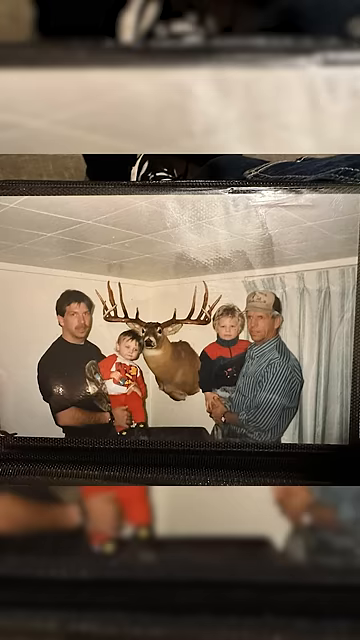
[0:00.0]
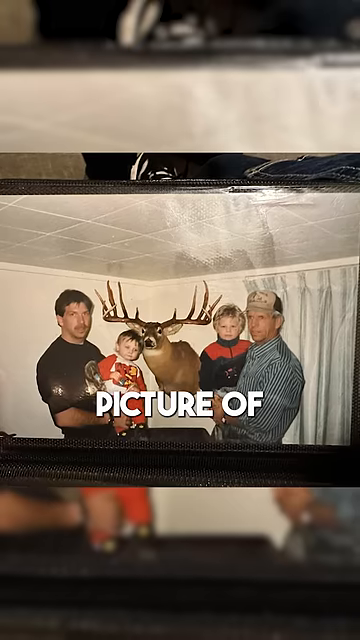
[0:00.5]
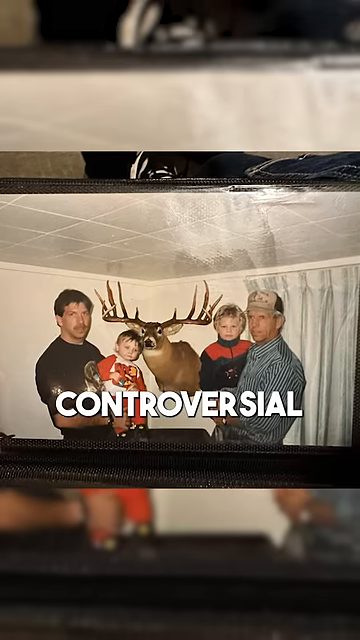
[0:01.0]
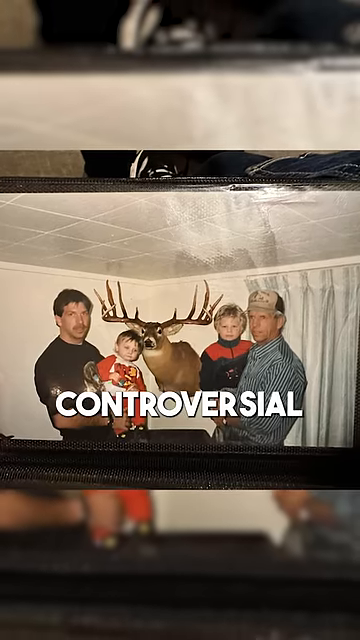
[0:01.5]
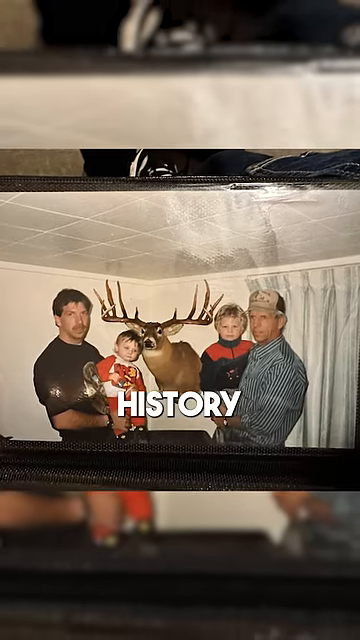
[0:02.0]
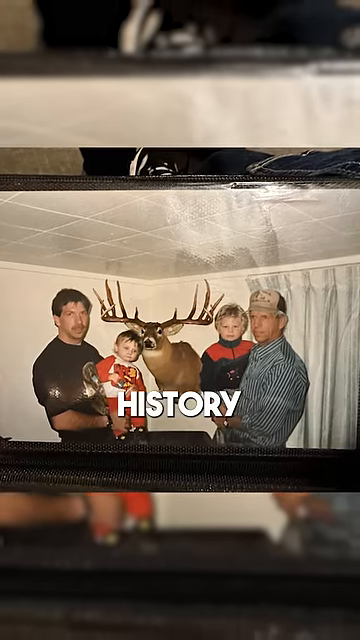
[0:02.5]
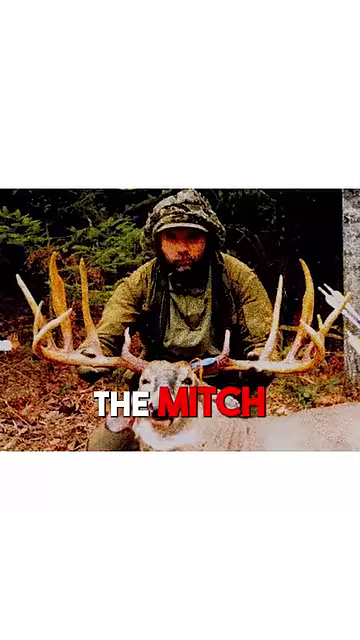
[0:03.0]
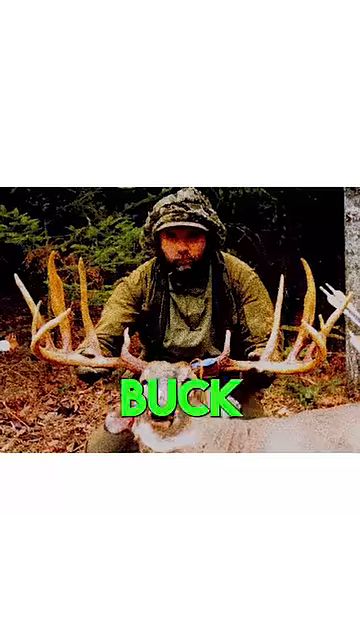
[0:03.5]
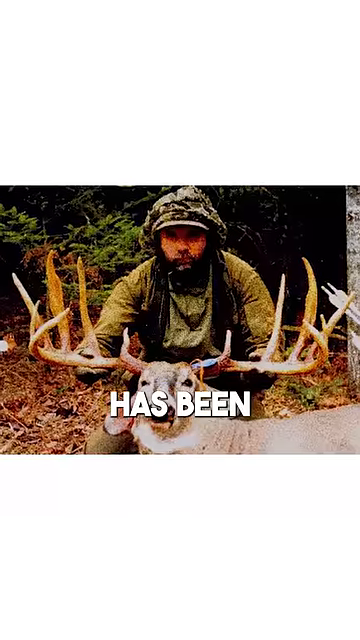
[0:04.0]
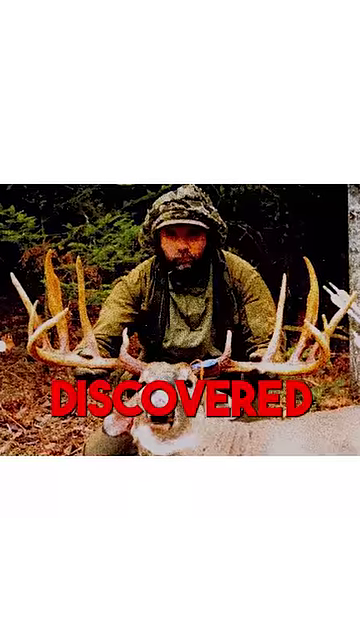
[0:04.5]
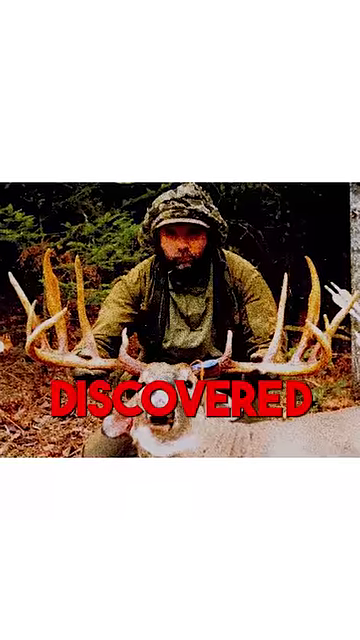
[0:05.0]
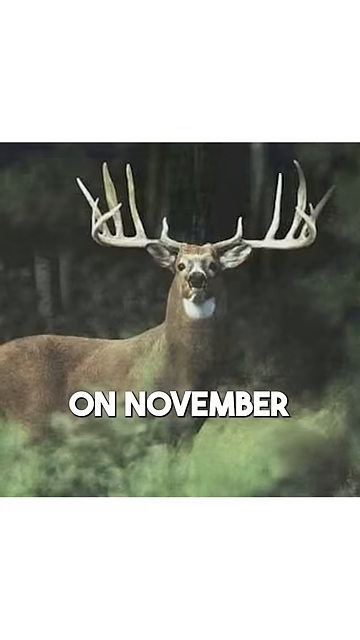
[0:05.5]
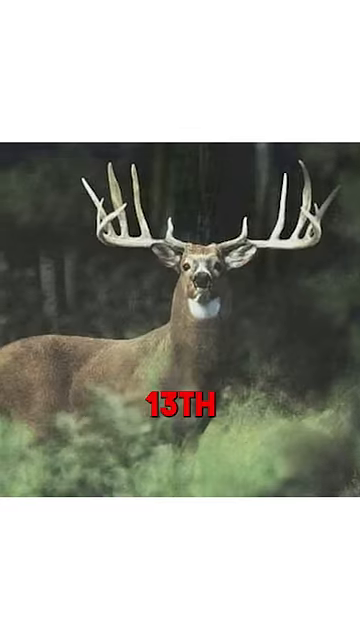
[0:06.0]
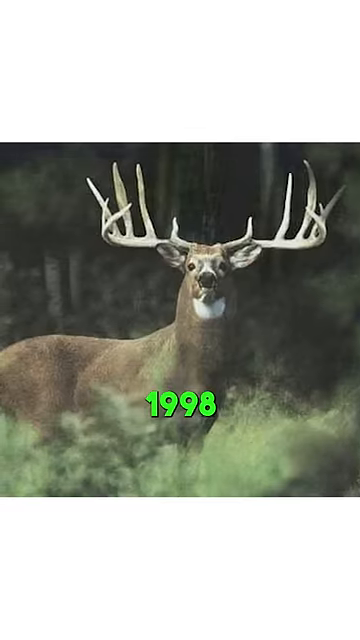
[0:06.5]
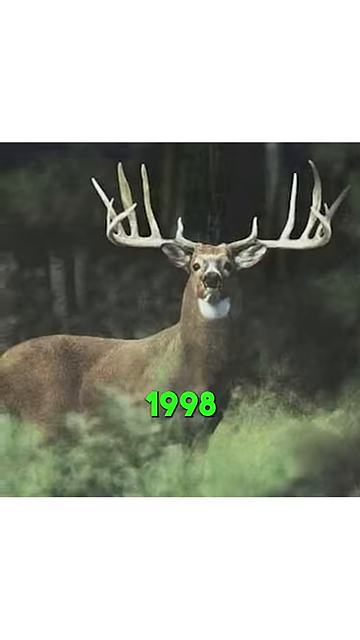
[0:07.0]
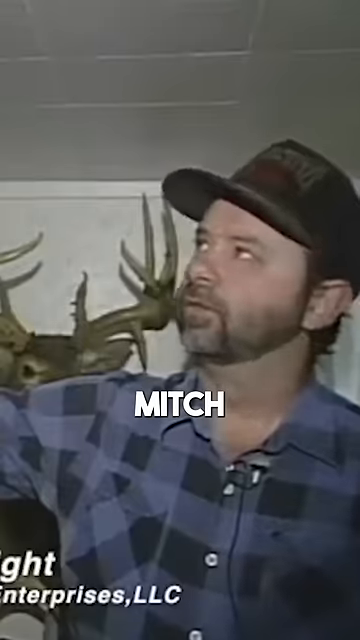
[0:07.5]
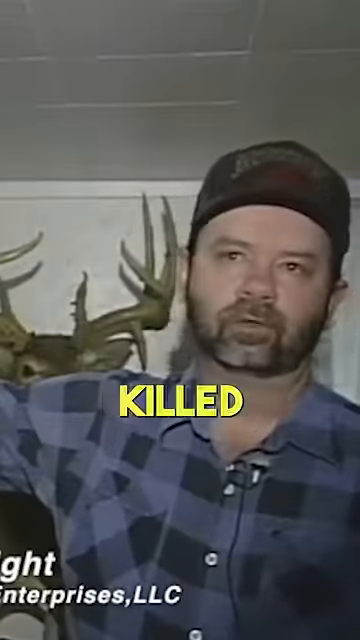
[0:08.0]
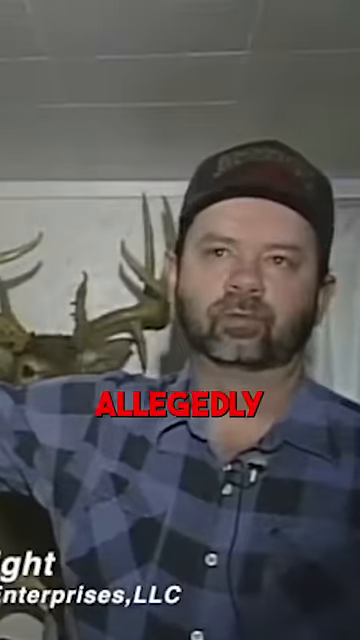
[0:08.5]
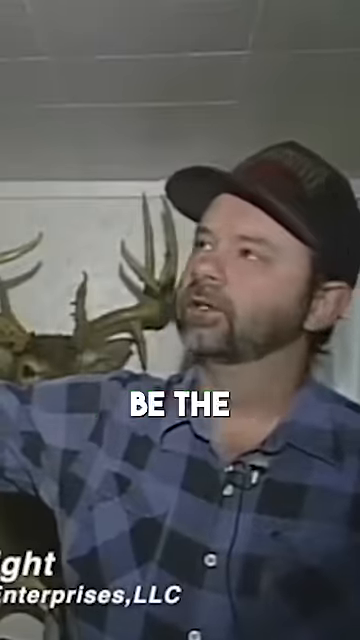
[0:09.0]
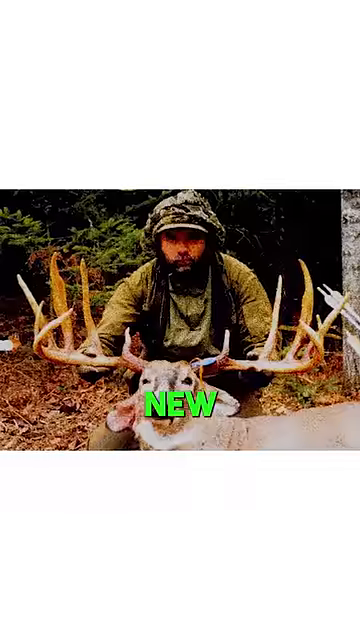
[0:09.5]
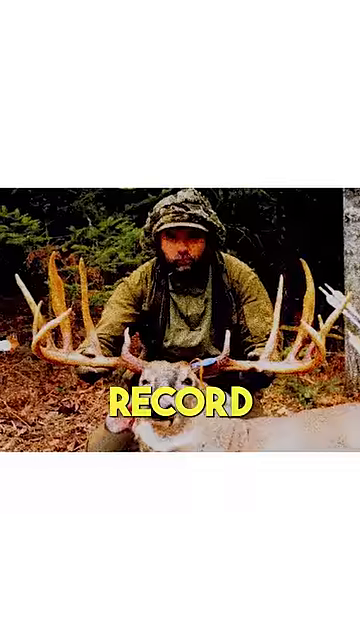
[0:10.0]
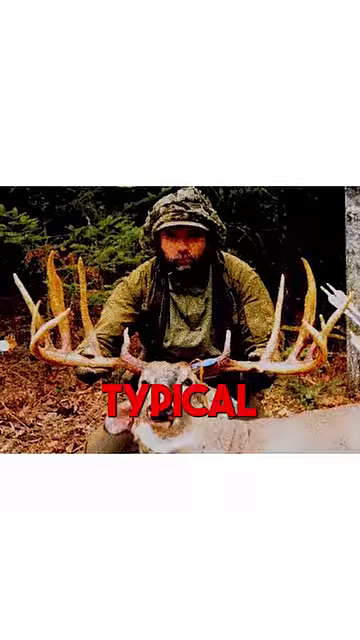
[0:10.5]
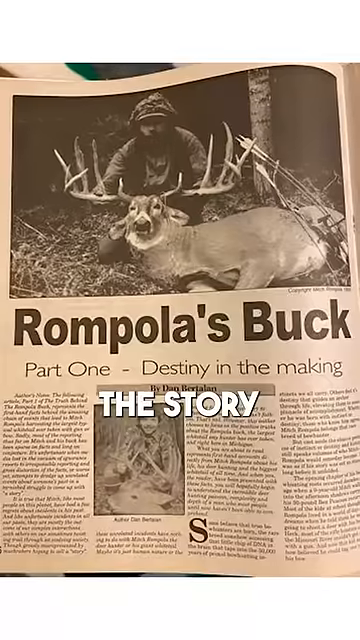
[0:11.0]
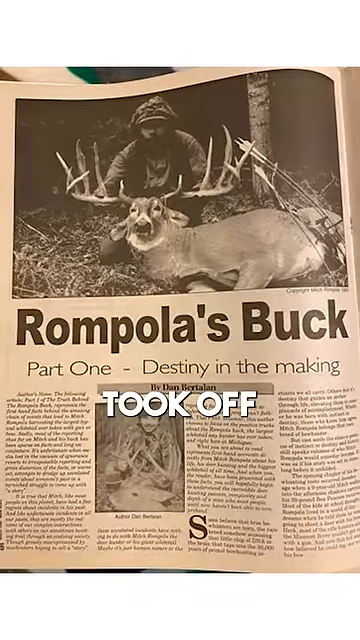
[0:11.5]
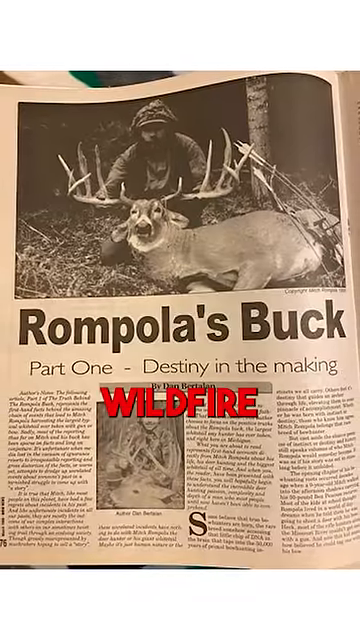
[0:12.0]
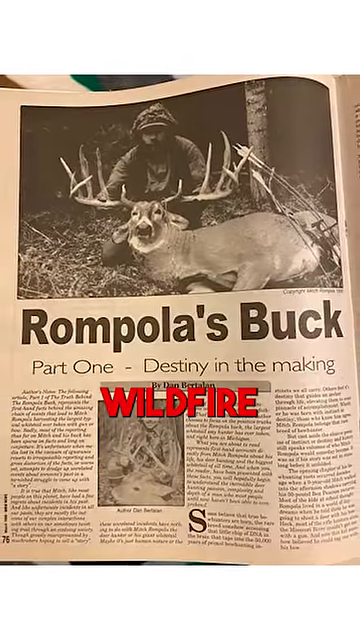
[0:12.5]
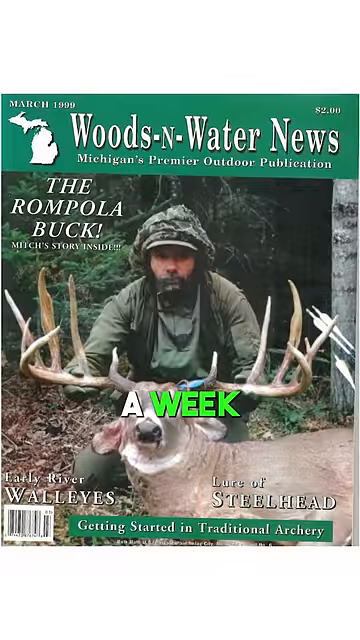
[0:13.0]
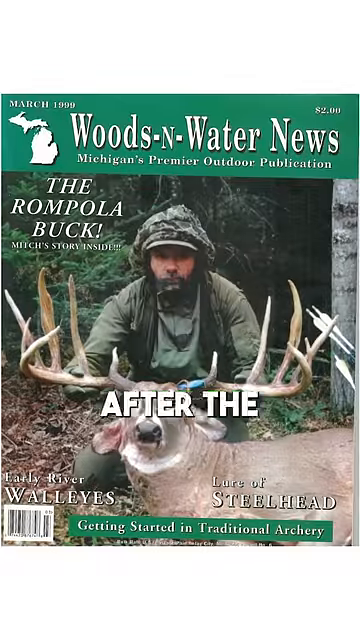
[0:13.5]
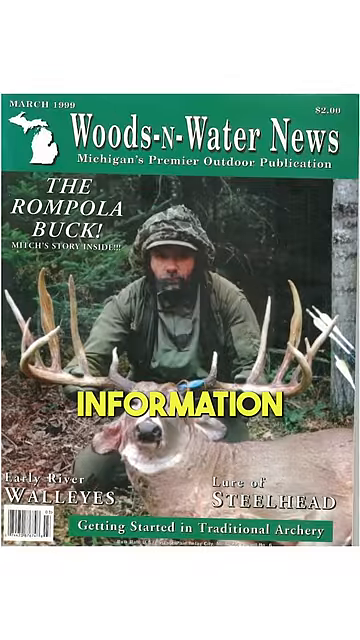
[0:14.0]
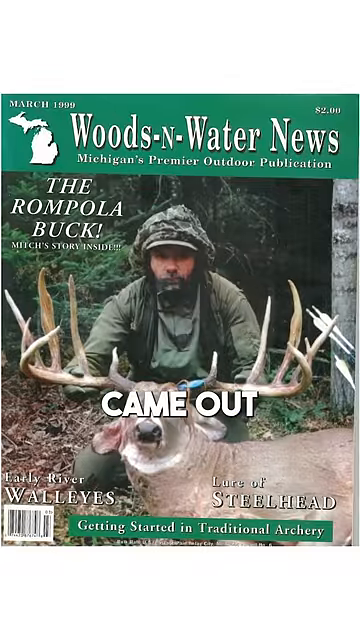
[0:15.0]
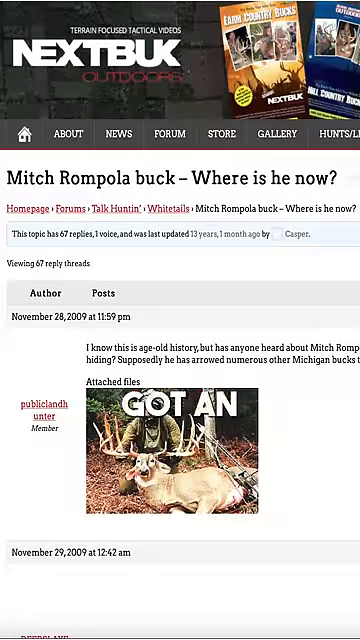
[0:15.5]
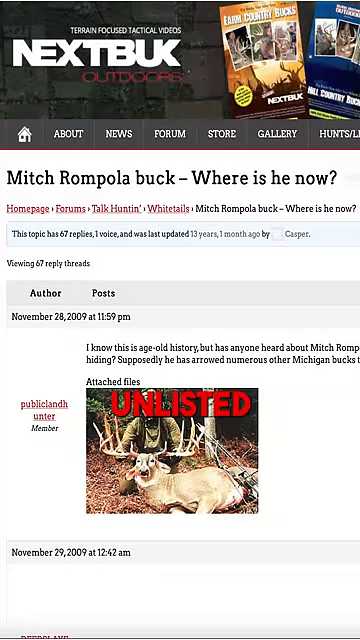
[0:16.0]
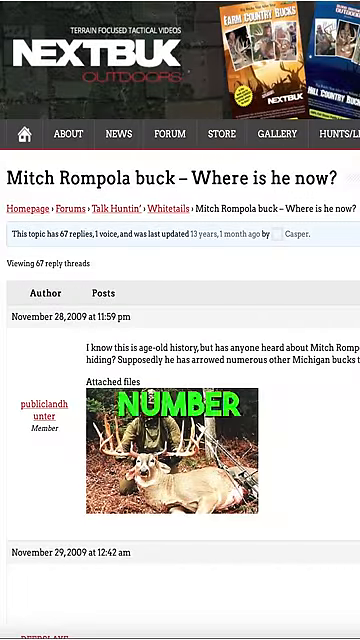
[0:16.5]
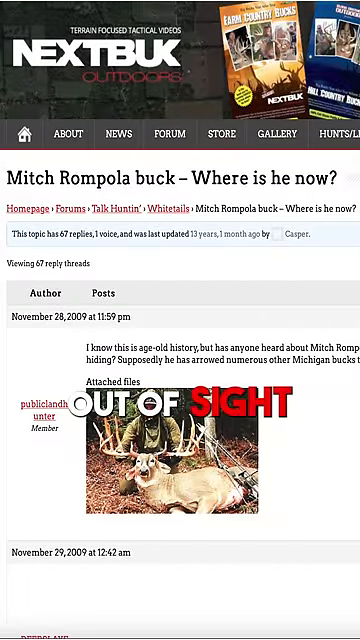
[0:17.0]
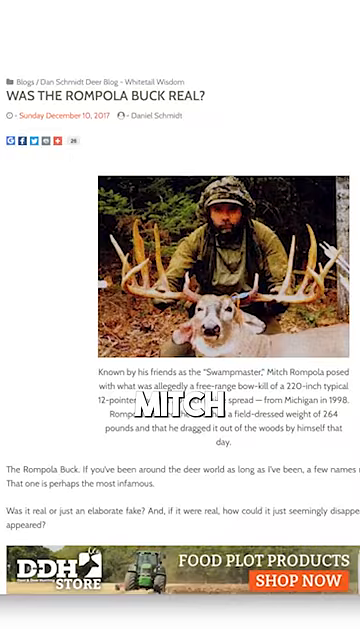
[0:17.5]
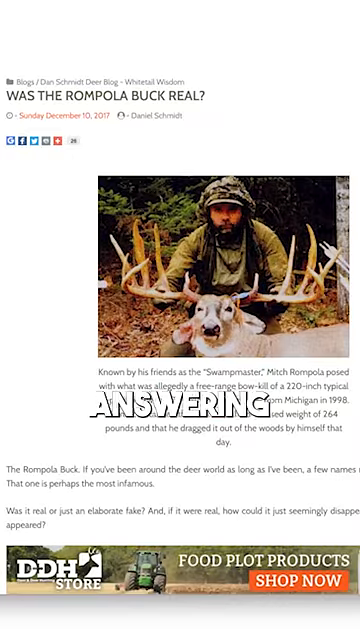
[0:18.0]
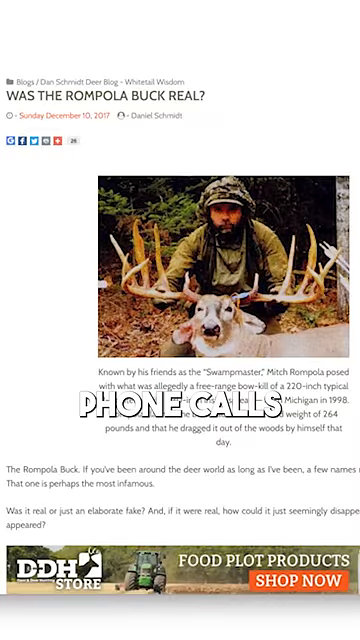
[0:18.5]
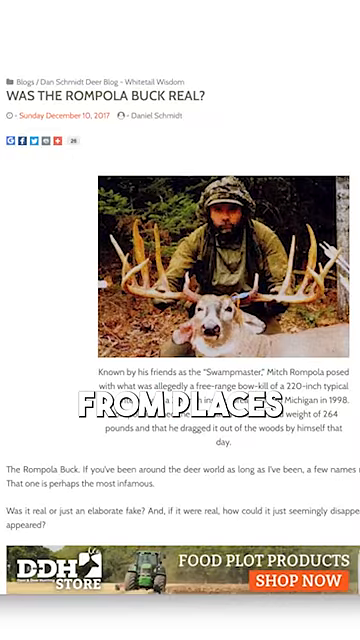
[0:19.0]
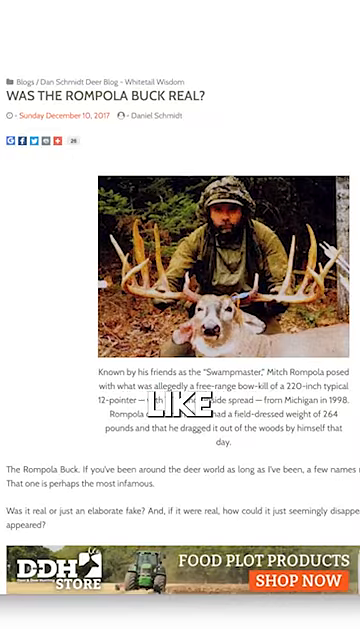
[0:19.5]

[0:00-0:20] The video opens with a man and his family, then moves forward through several pictures. The pictures come to focus on a massive-looking deer called the Rampola's Buck, which is named after the man who killed it. The man seen at the beginning is Mitch Rampola.